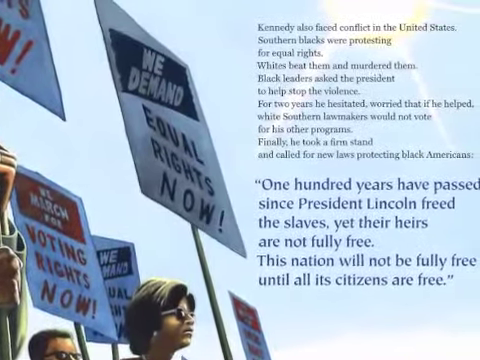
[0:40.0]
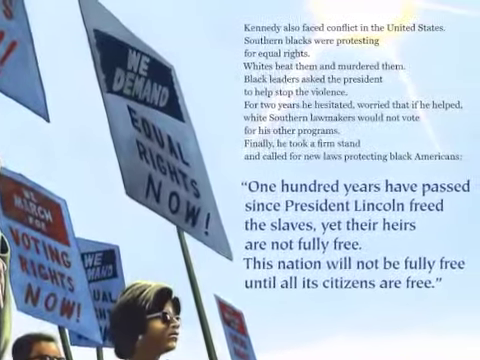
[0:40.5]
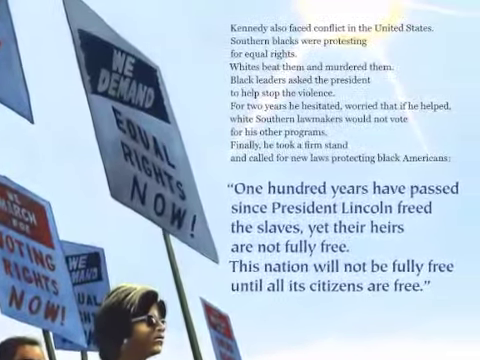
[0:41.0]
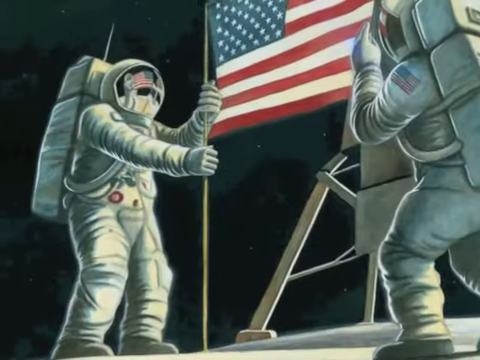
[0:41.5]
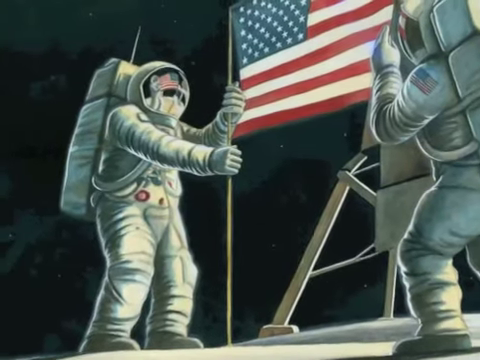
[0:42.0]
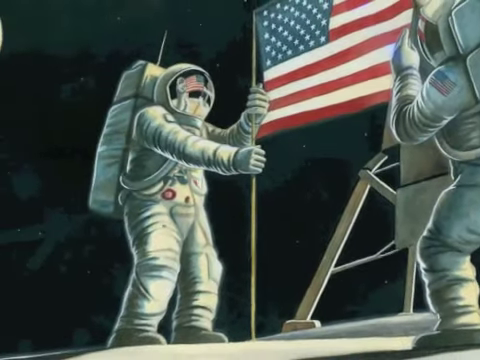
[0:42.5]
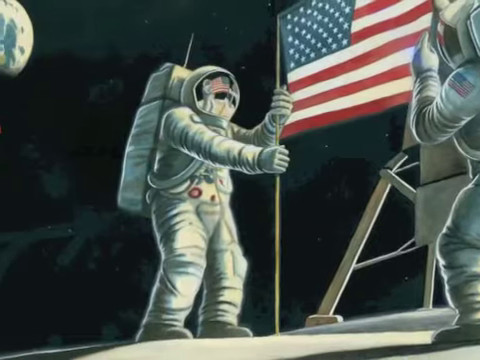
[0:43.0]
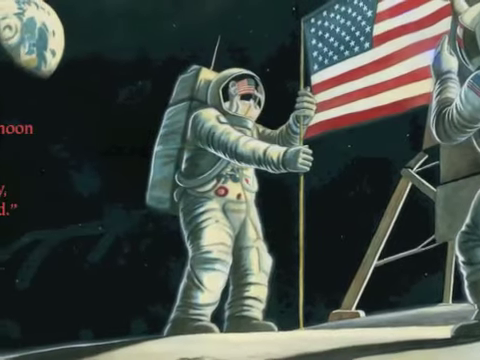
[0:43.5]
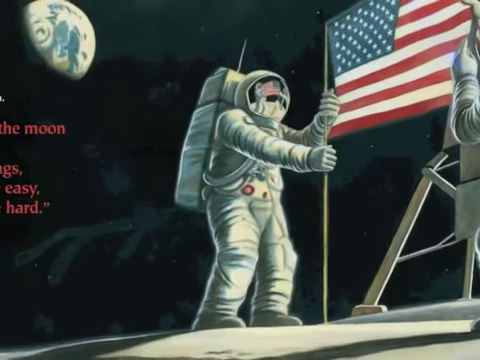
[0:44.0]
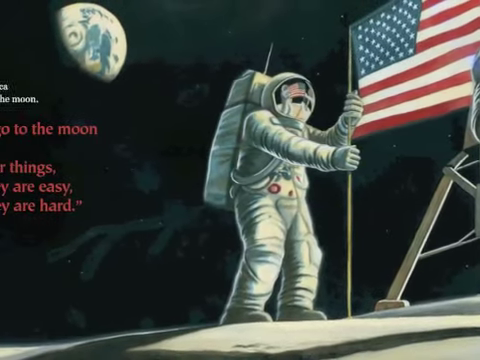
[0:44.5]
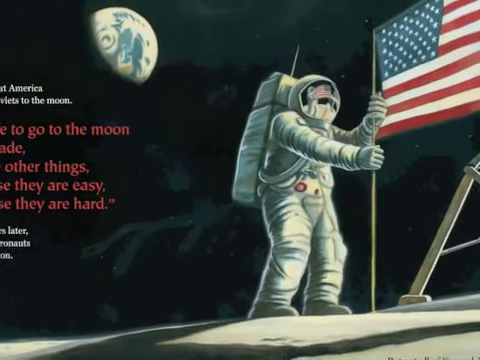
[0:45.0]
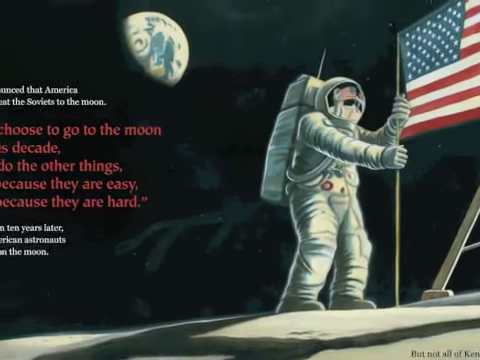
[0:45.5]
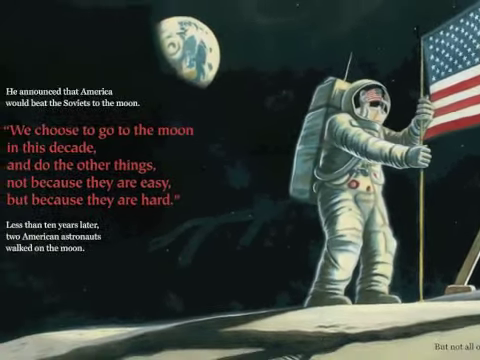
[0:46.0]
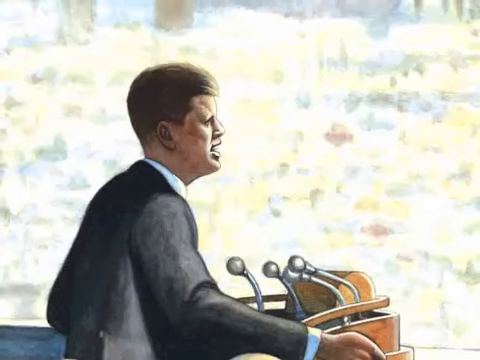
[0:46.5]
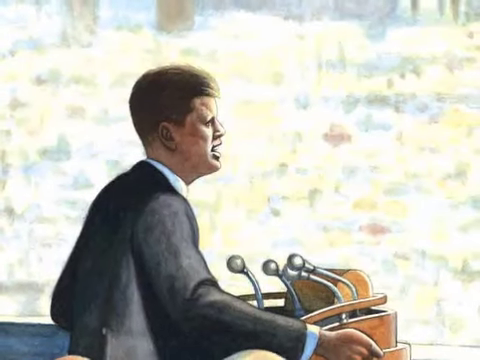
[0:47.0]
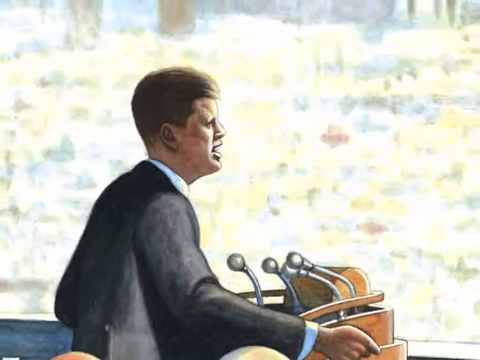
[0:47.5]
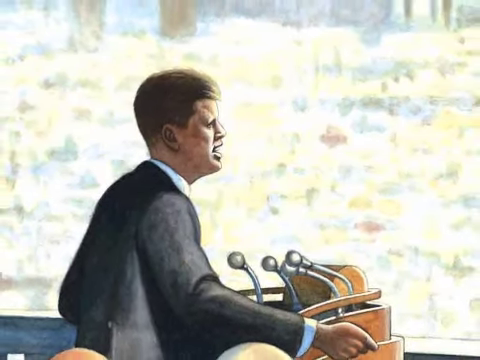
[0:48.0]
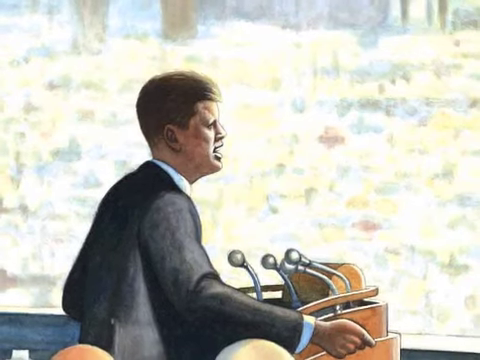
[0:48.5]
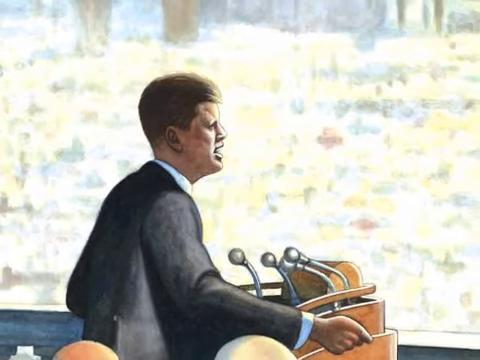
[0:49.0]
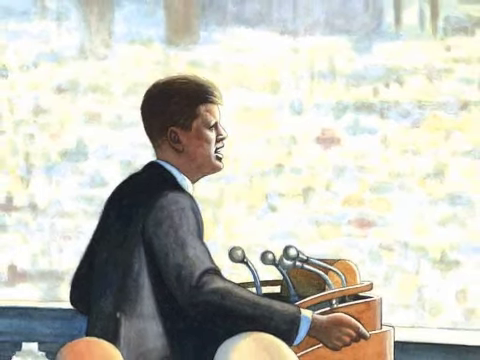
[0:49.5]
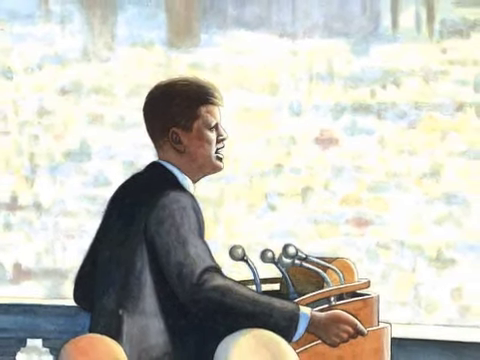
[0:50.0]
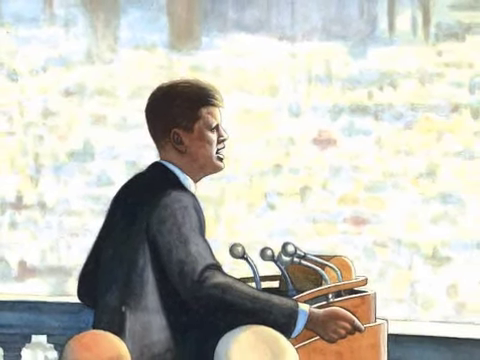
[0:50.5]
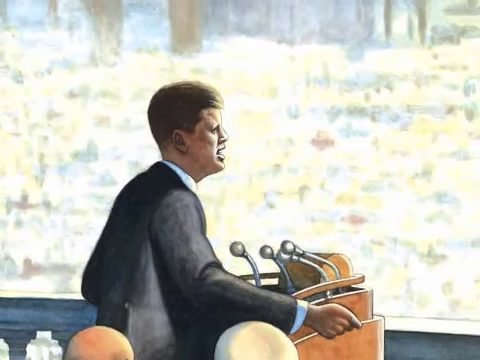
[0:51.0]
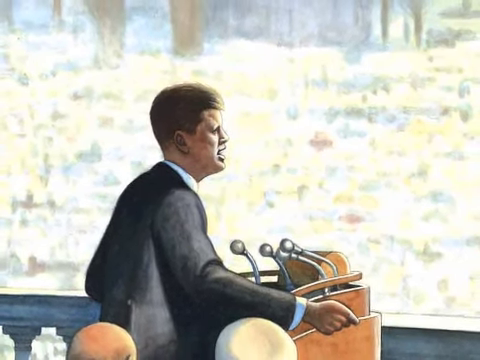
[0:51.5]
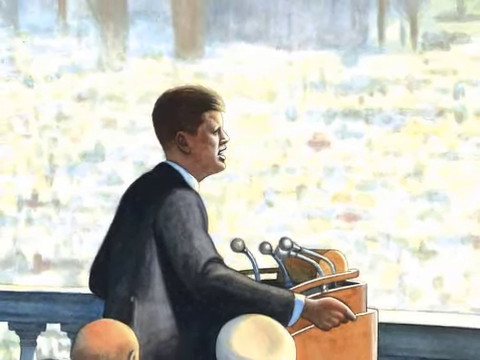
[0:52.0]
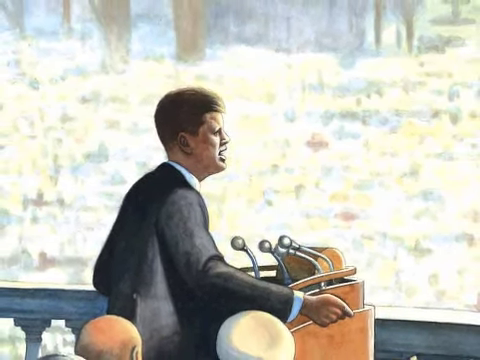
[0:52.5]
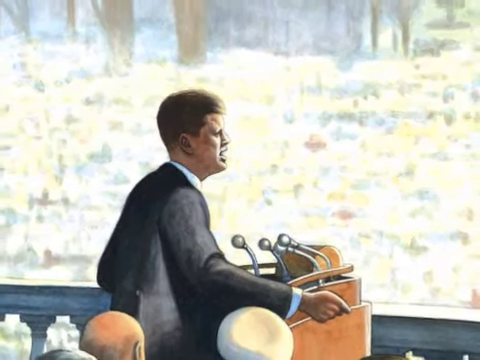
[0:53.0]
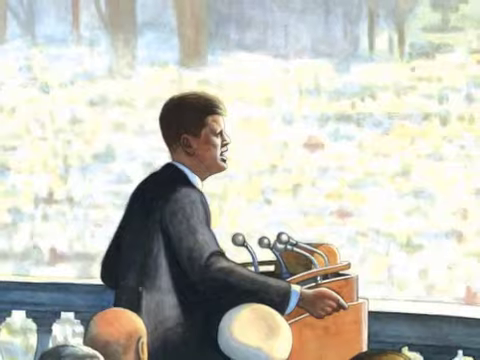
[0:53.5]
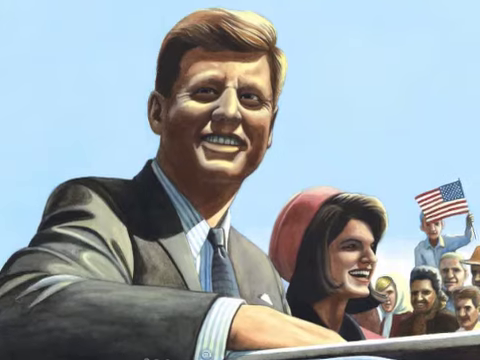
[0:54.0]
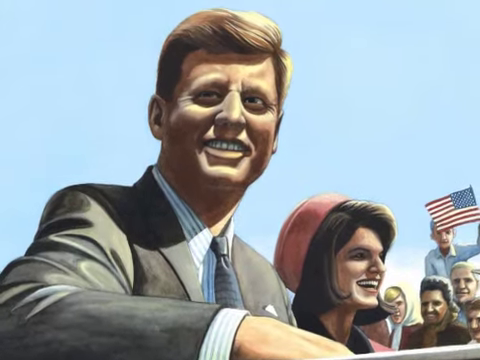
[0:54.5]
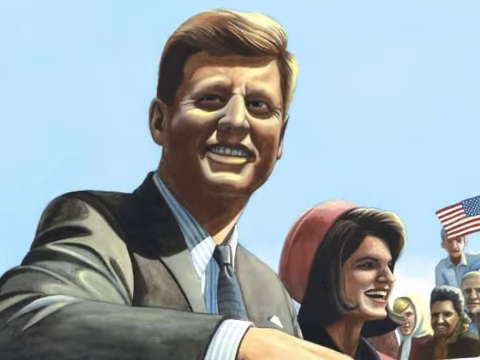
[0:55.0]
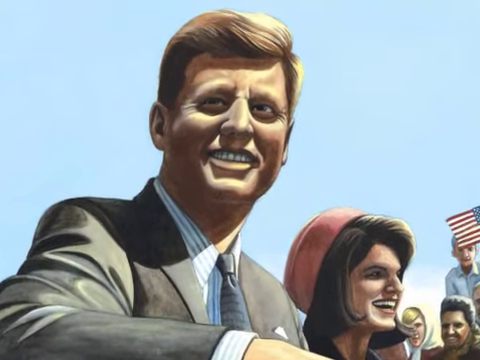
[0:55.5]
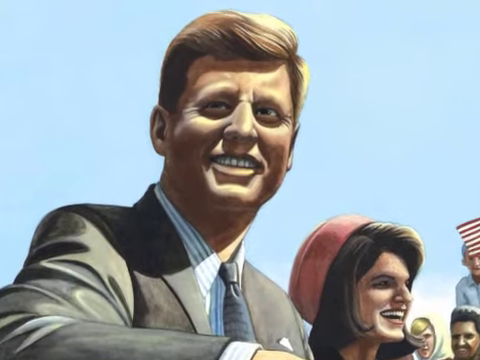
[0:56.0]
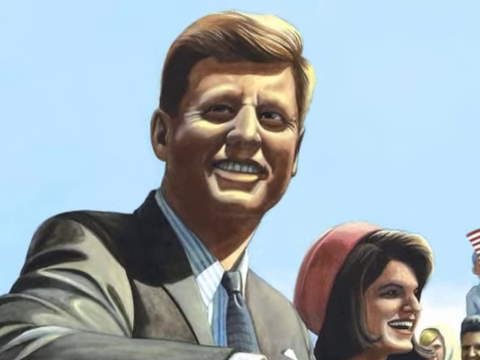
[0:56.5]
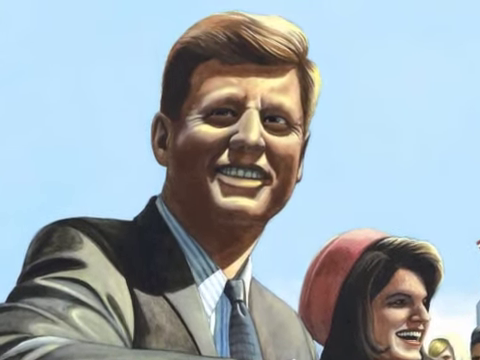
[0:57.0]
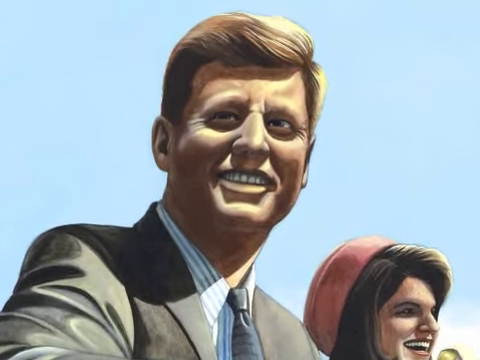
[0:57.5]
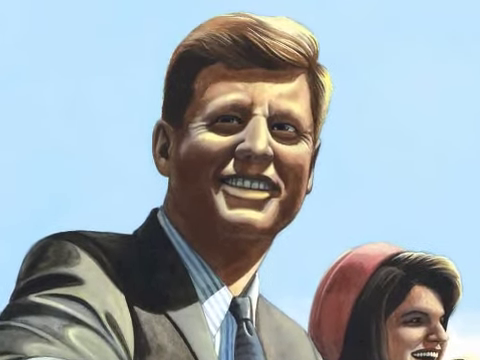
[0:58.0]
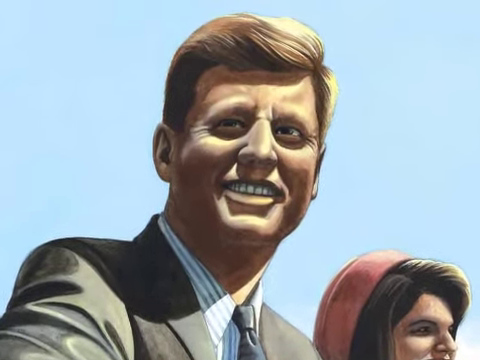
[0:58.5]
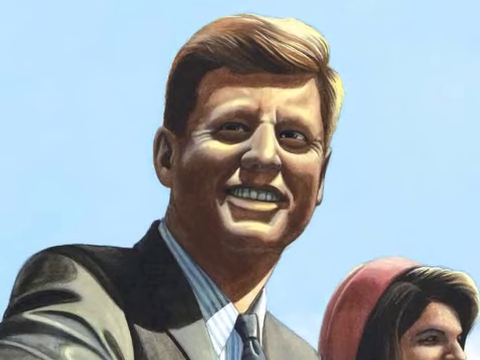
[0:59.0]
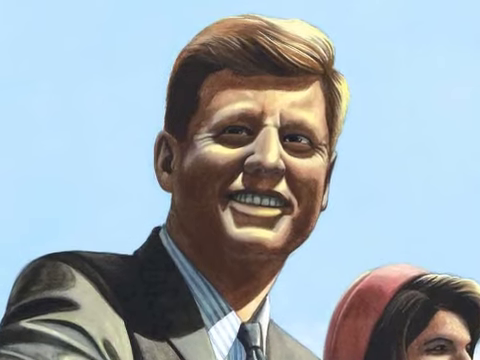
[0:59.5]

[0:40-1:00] Words on the screen read: "Kennedy also faced conflict in the United States. Southern blacks were protesting for equal rights. Whites beat them and murdered them. Black leaders asked the president to help stop the violence. For two years, he hesitated, worried that if he helped the whites, they would not vote for his other programs. Finally, he took a firm stand and called for new laws protecting Black Americans. One hundred years have passed since President Lincoln freed the slaves. Yet their heirs are not fully free. This nation will not be fully free until all its citizens are free." Then an illustration shows two astronauts wearing helmets and holding an American flag, with words in the background that include "would choose to go to the moon in this decade and do other things, not because they were easy, but because they were hard. Less than 10 years later, two American astronauts walked on the moon." He is shown speaking to a large crowd at a podium with several microphones attached to it.